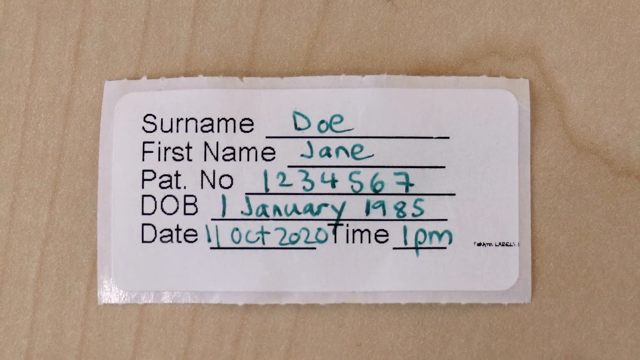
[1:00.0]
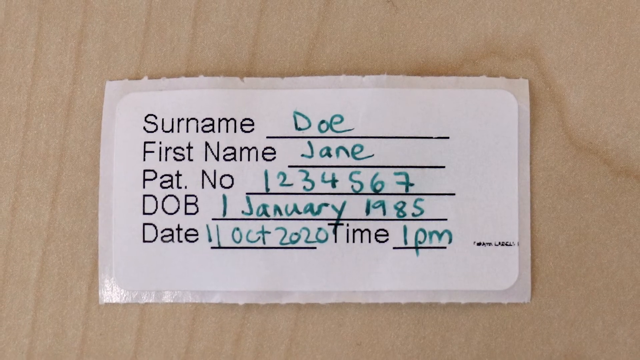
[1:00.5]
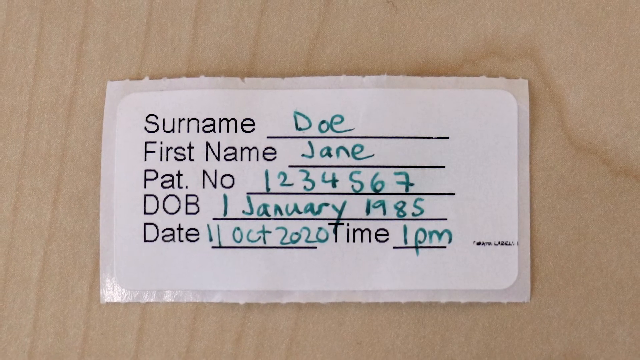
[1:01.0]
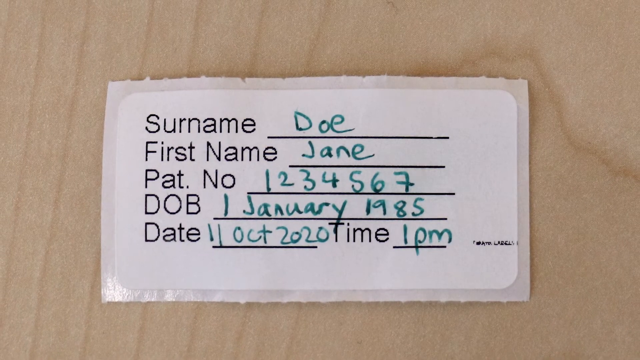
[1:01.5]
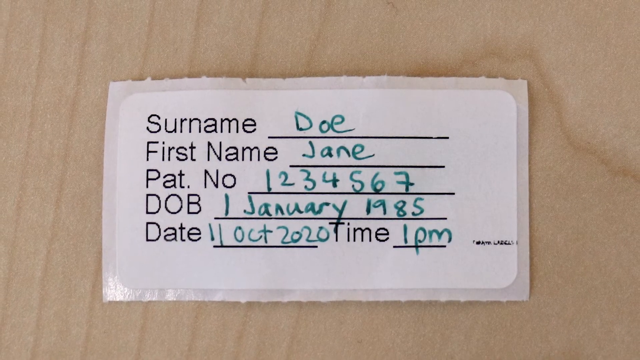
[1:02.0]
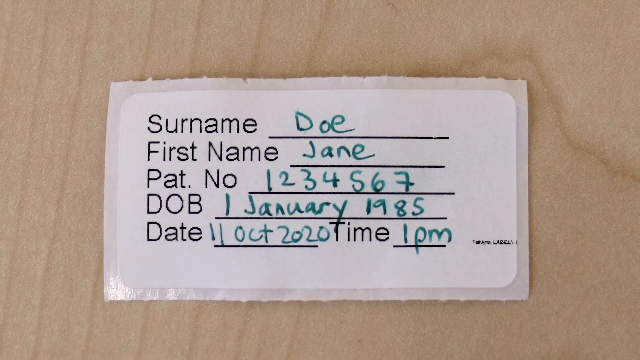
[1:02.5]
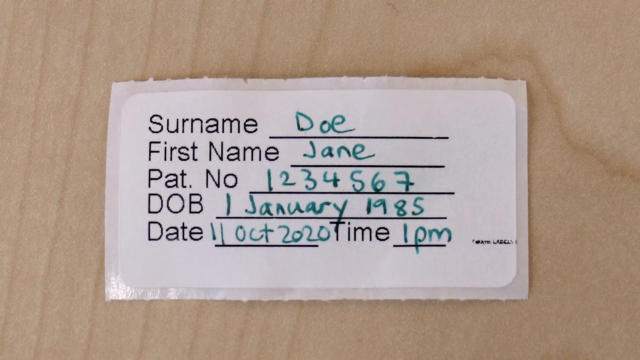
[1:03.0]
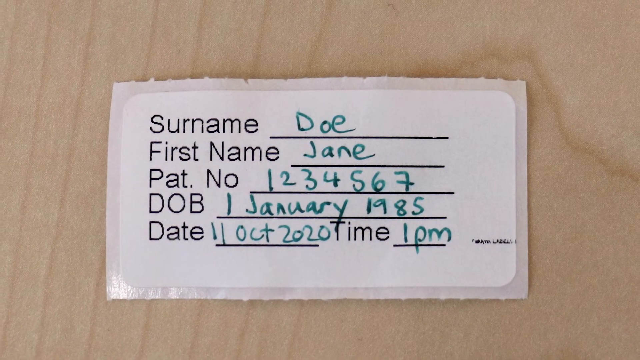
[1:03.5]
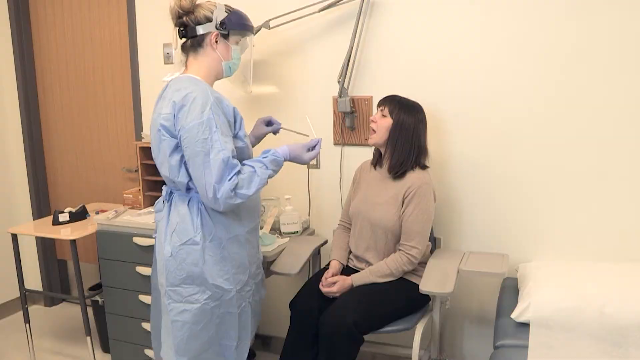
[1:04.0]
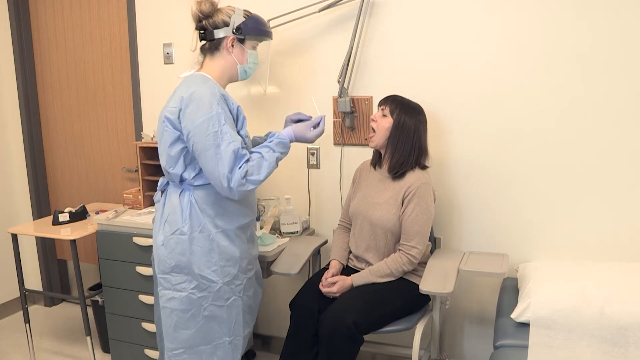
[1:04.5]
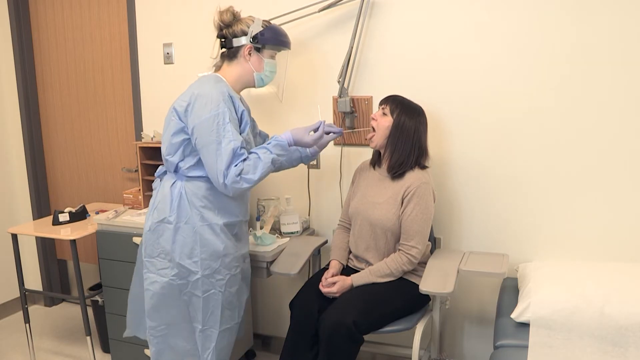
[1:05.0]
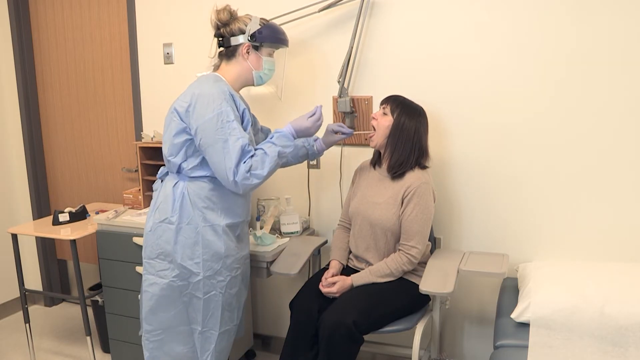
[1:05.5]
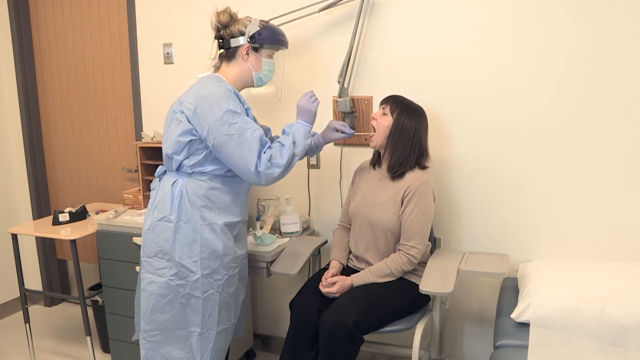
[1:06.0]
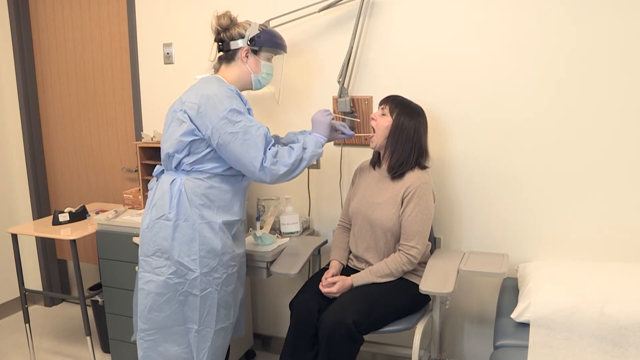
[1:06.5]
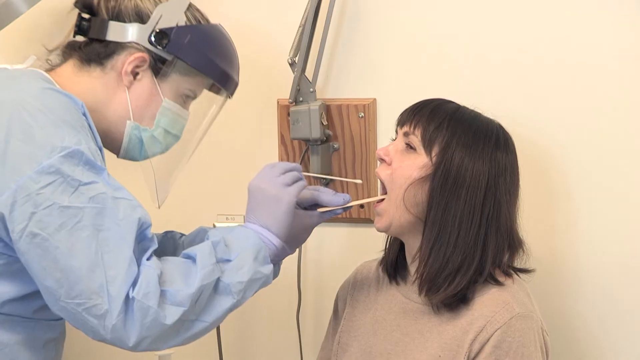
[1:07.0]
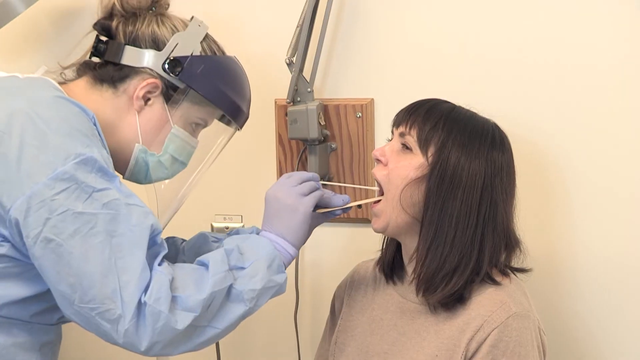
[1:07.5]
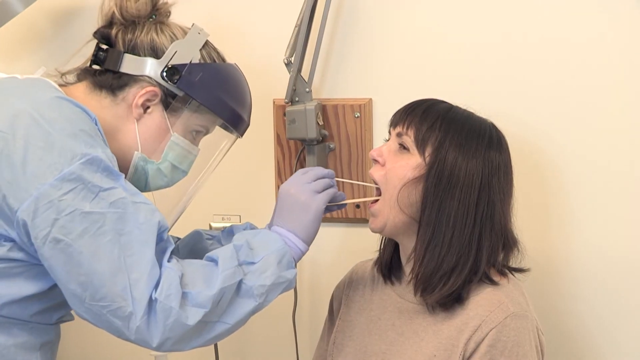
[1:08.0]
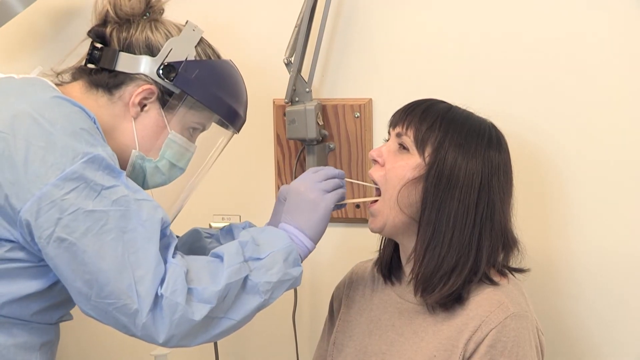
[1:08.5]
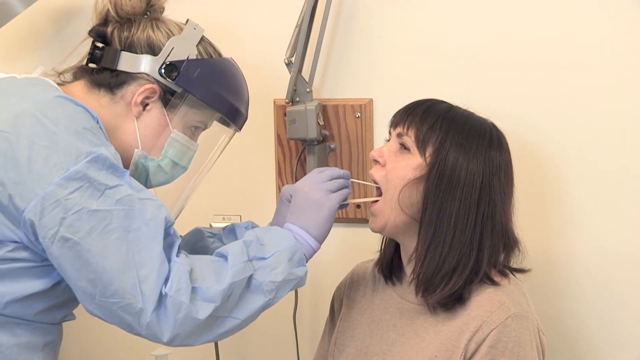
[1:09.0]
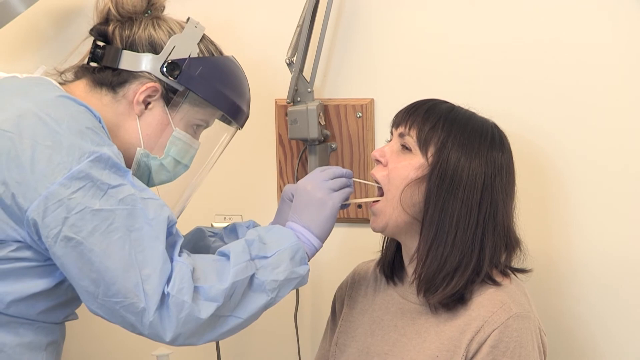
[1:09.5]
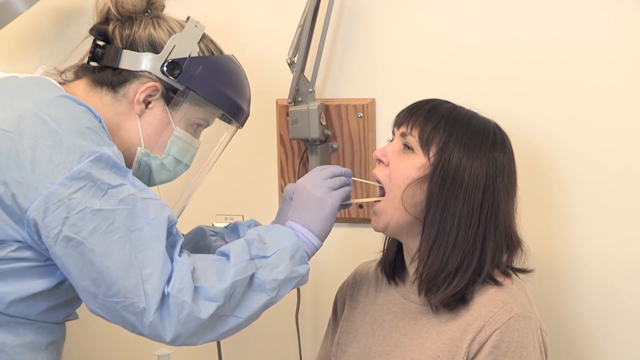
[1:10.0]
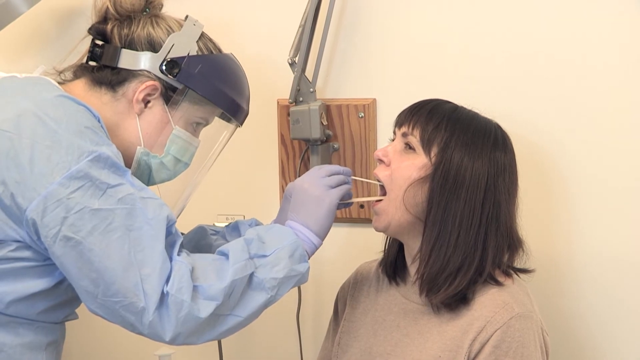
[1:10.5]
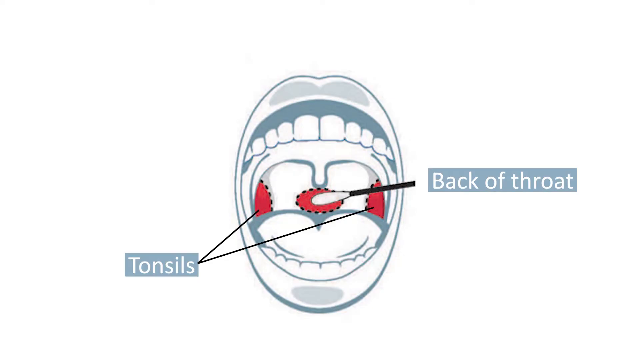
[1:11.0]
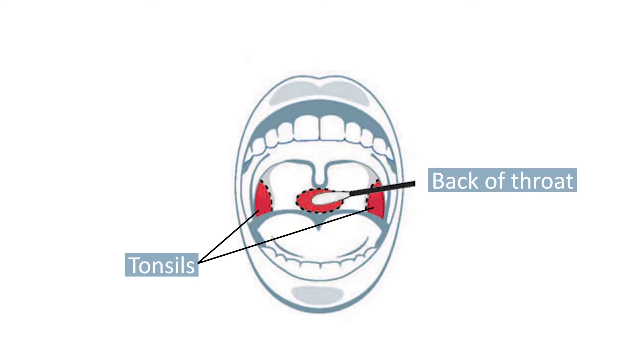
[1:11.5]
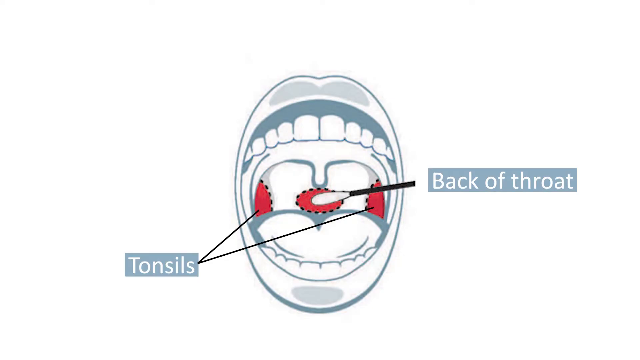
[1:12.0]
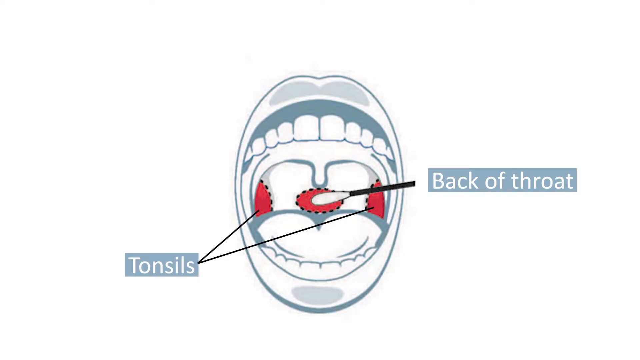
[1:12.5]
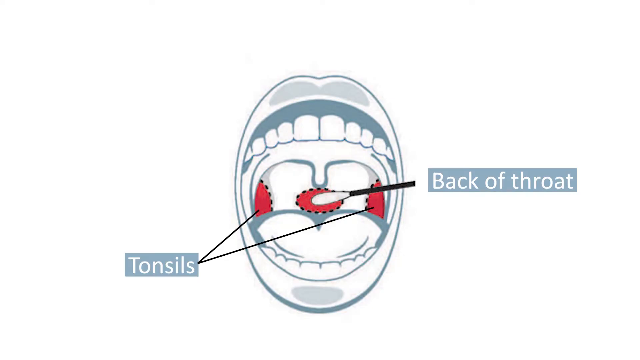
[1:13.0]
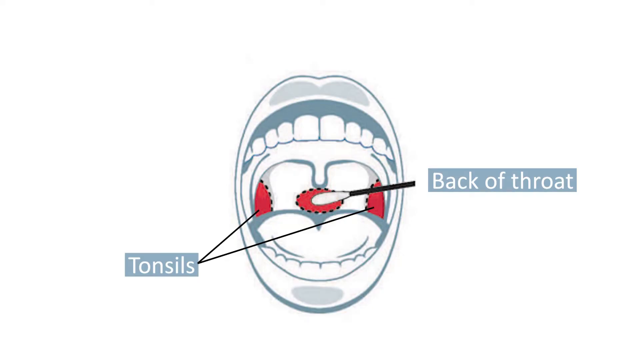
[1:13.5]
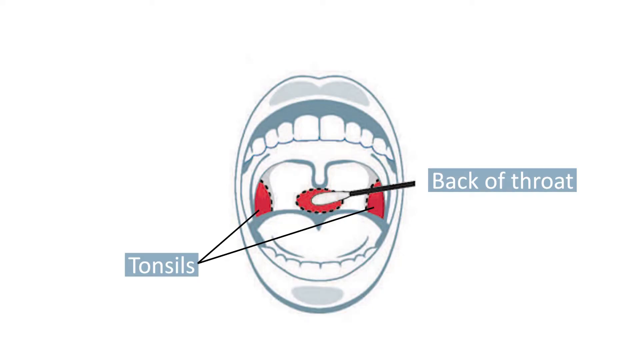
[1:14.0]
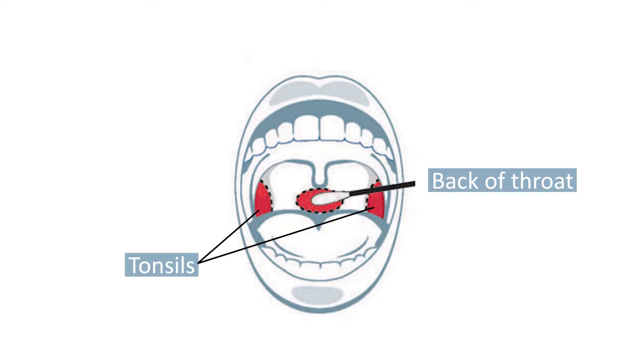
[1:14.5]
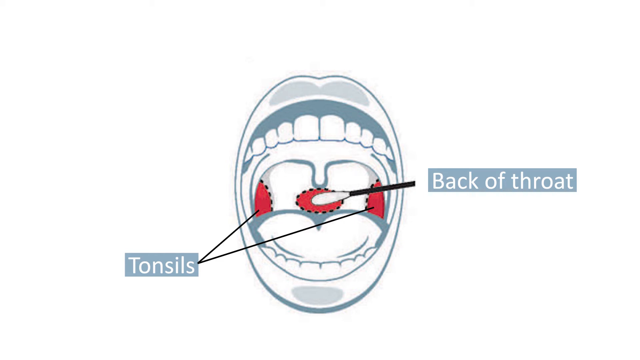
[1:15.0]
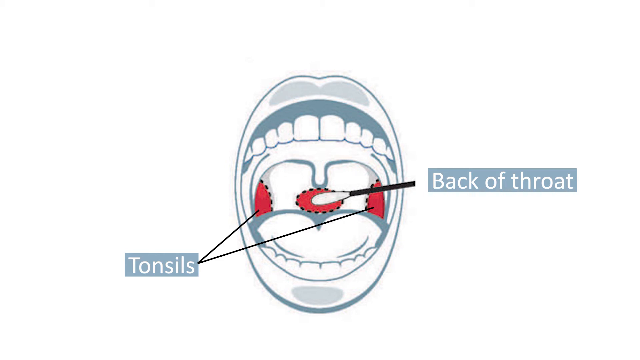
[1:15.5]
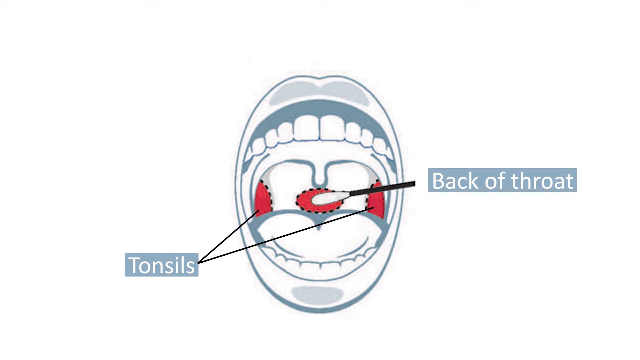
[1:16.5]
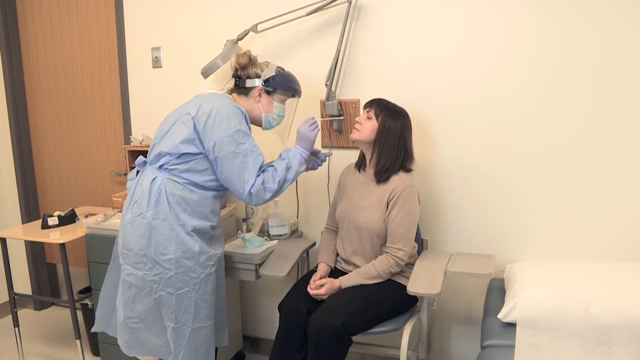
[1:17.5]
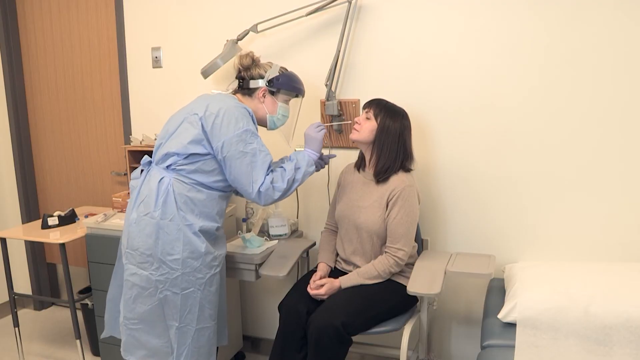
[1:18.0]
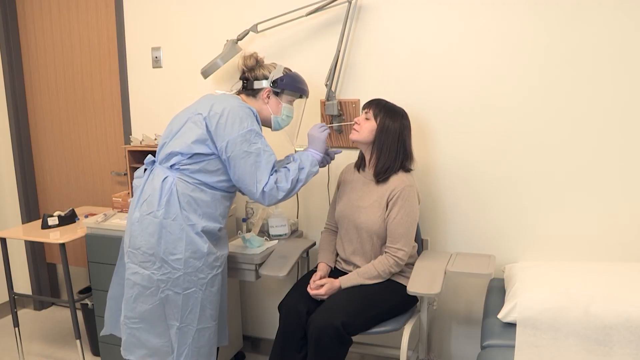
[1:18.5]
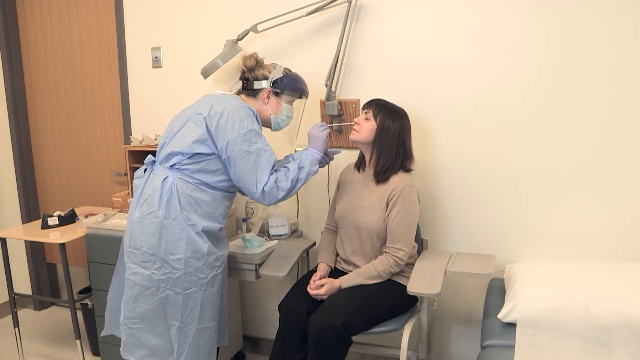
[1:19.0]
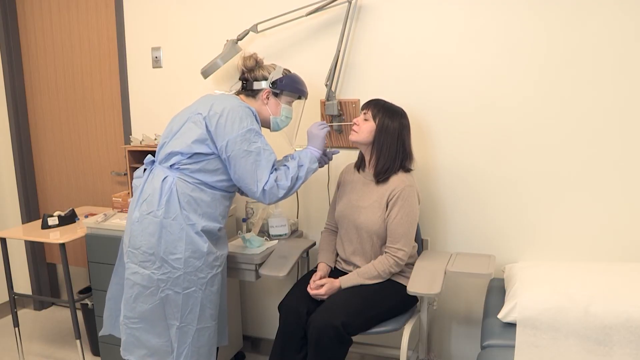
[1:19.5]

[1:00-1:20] The seated woman has her mouth open. The woman in protective equipment, a doctor or nurse, holds a tongue depressor on the seated woman's tongue with her left hand and, with the swab in her right hand, places it inside the woman's mouth, kind of scraping the inside of it. She is kind of bending down to look inside the seated woman's mouth. Next, a graphic shows an open mouth with the teeth, the tonsils in the background, the tongue, and the lips. A label points at the tonsils on each side, and another label reads "back of throat" at the center of the back of the throat, where the swab is kind of placed. The seated woman just sits there while her mouth is swabbed for the test.